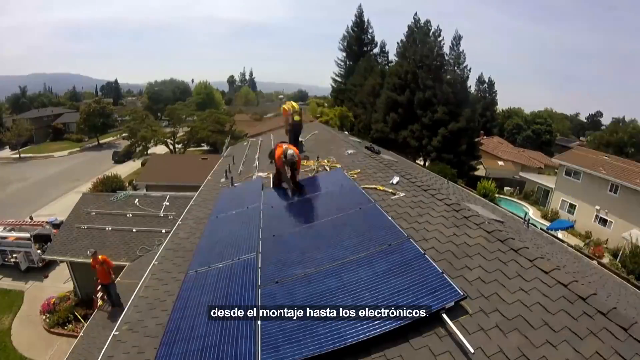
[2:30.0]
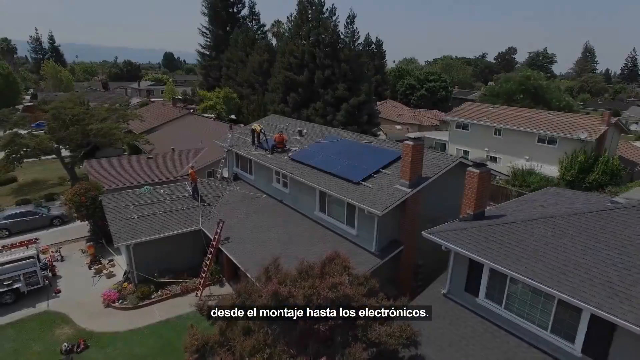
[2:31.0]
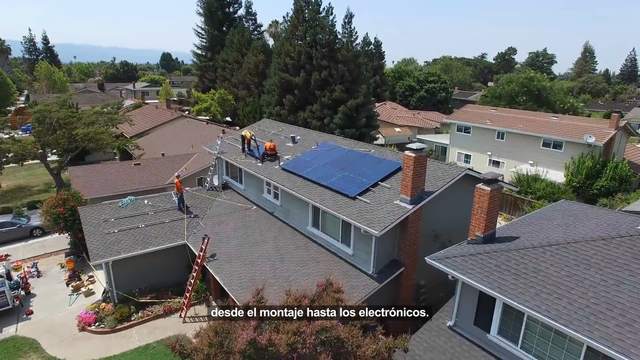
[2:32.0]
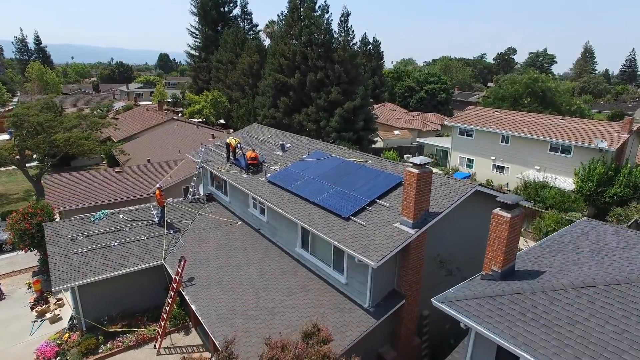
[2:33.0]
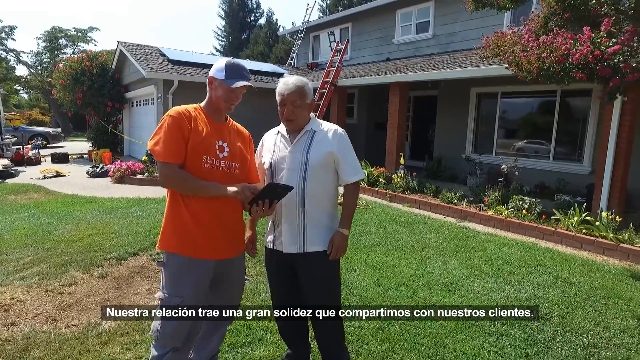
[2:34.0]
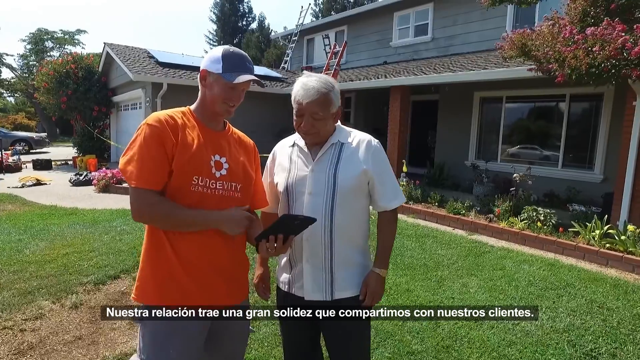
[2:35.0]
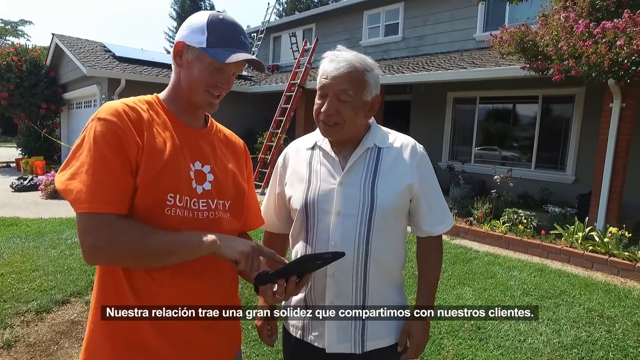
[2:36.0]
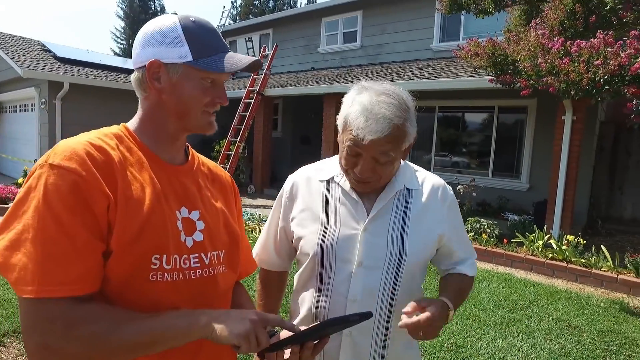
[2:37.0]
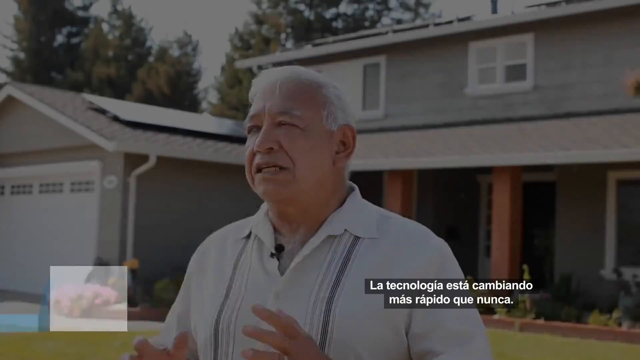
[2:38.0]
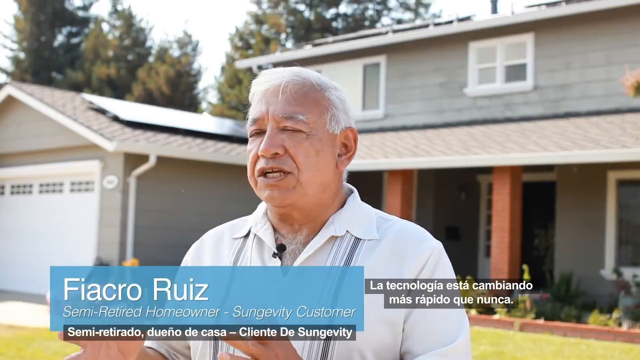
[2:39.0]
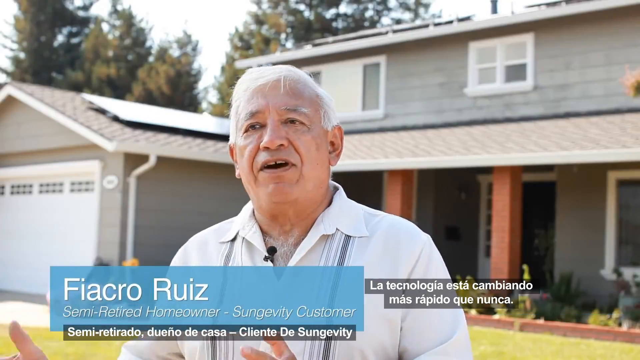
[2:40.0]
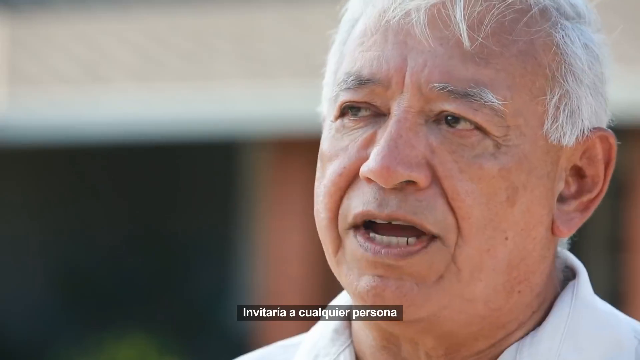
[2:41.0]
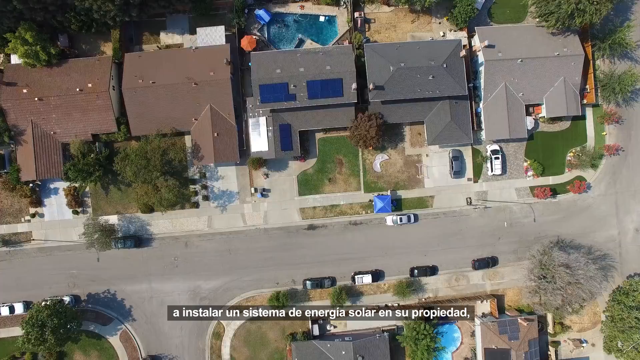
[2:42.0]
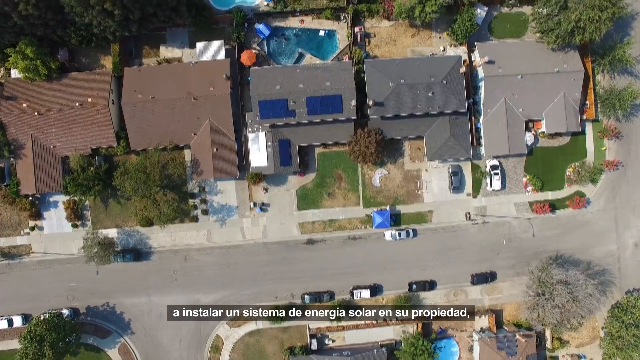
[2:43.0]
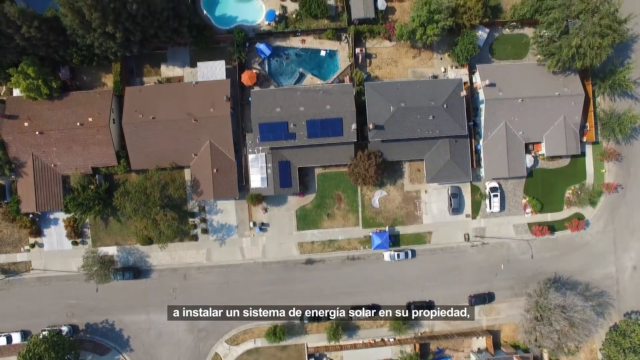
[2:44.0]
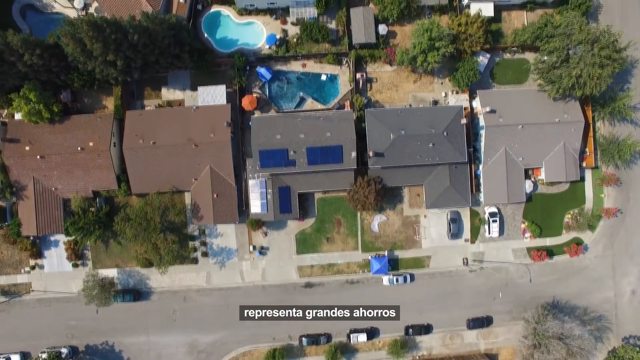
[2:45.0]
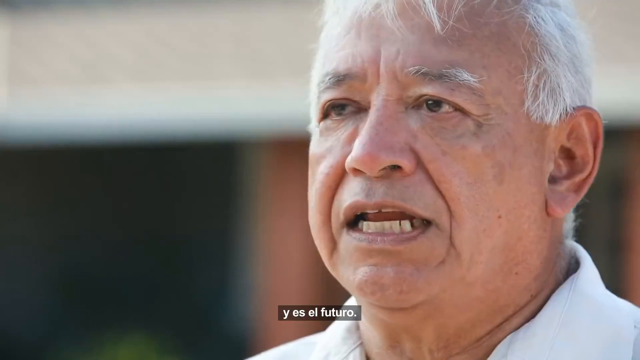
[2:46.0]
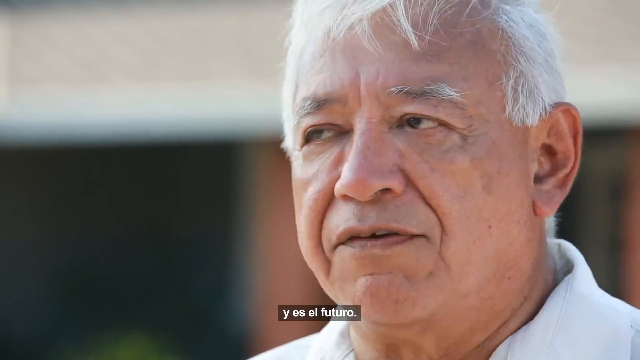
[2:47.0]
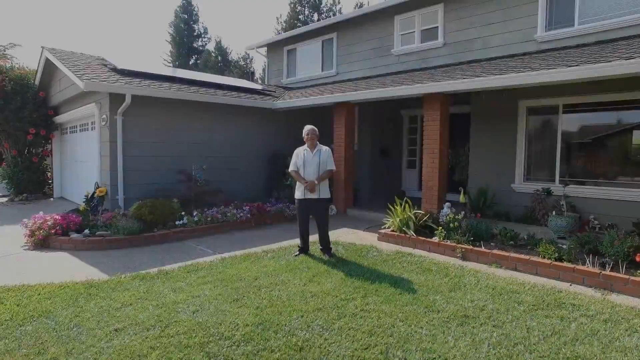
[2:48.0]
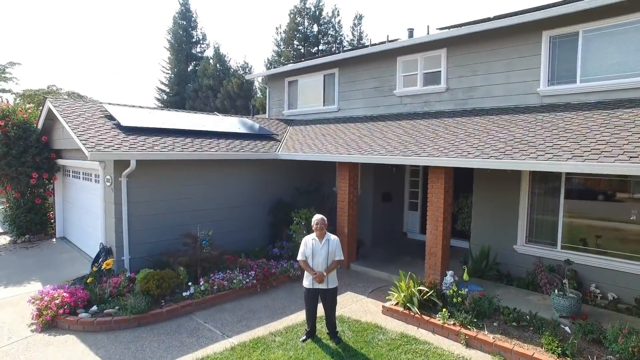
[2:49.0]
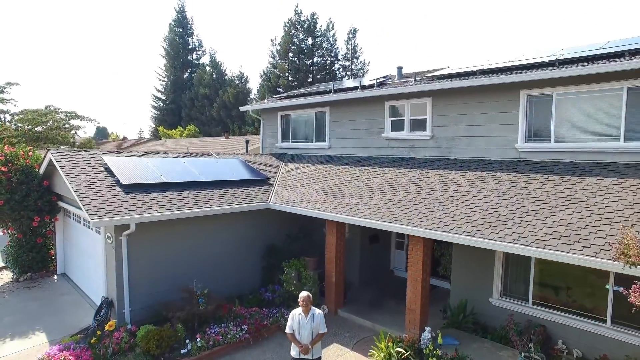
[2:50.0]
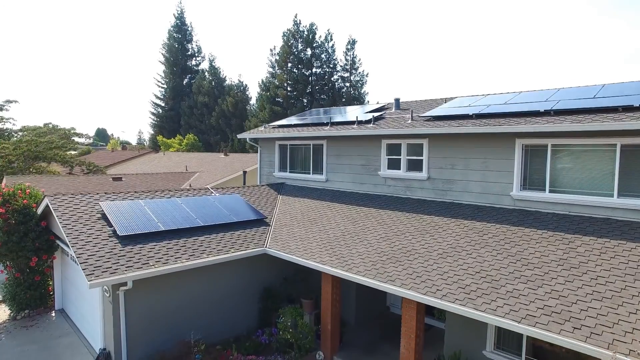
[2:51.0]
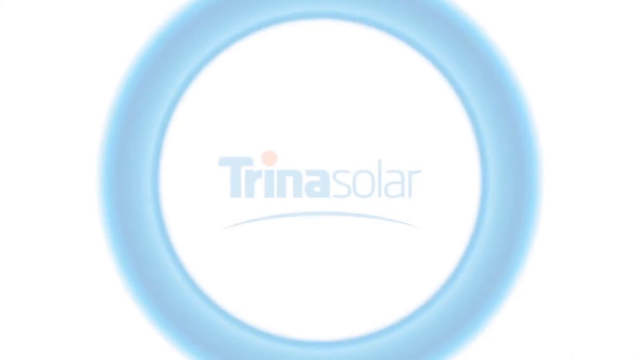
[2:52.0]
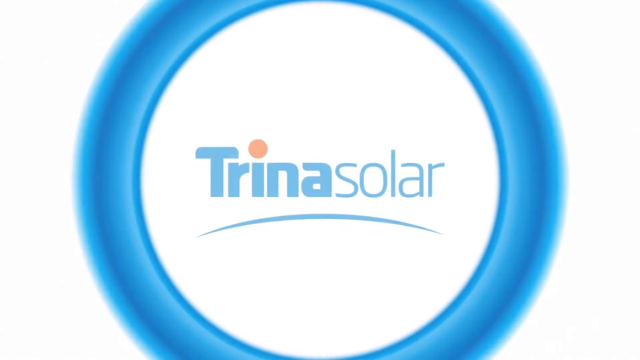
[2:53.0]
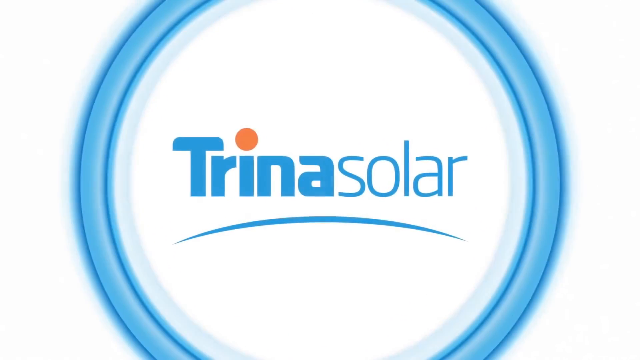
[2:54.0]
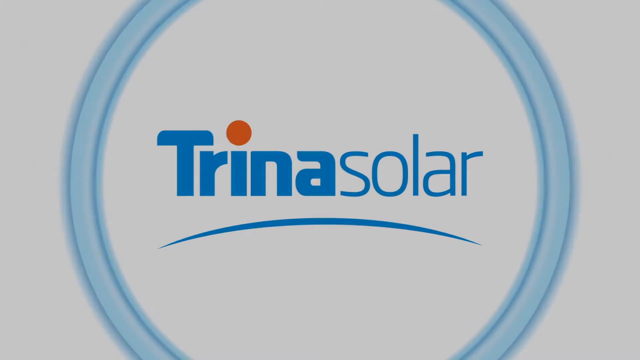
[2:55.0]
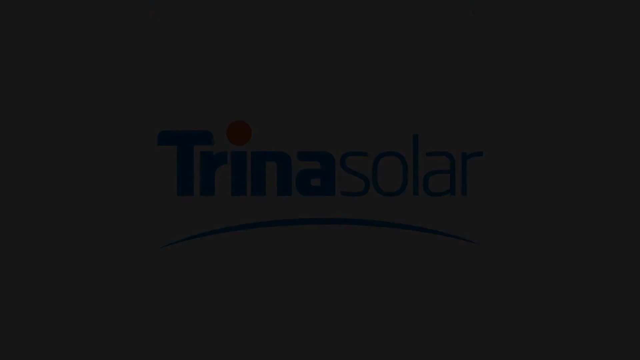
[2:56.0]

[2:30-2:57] A drone shot shows the top of the house, where the three workers are still working on the roof. There are two ladders: one from the ground to the first roof, and another on the first roof leading to the second roof. The workers look to be installing a solar panel on the top of the second roof, right next to the chimney; two workers are on the second roof and one on the first. The camera pans across them as they work. The video cuts to a shot zooming in on a worker in an orange Sungevity shirt and hat holding some type of iPad device toward a white-haired man in a white t-shirt with blue lines. They stand on his lawn as the worker explains something, with the house in the background. The man in the white shirt then speaks to the camera in front of his house, with his name shown as "Fiakoro Ruiz, semi-retired homeowner, Sungevity customer." A close shot of his face follows, and then a drone shot gives a top-down view of the house, the neighborhood, and the swimming pools.